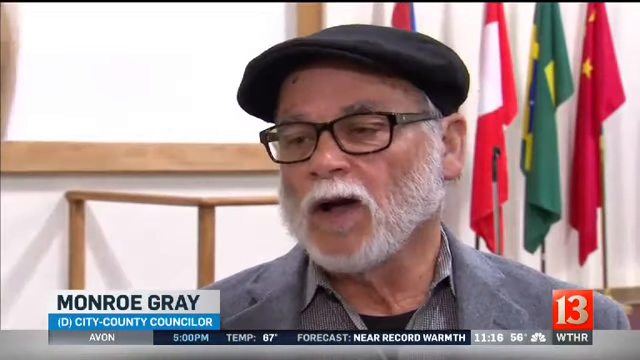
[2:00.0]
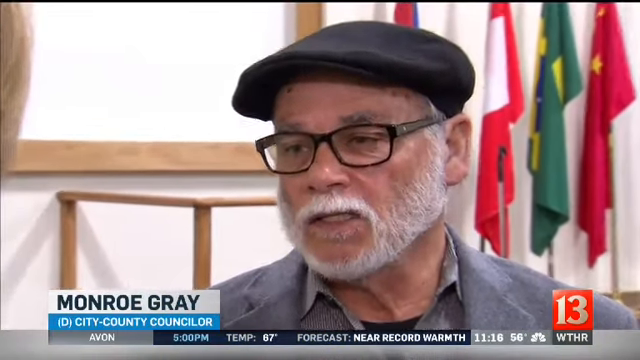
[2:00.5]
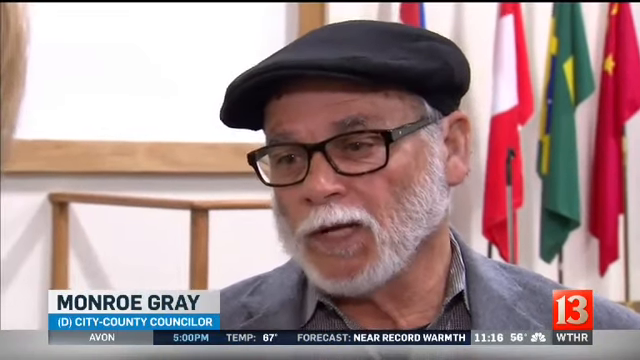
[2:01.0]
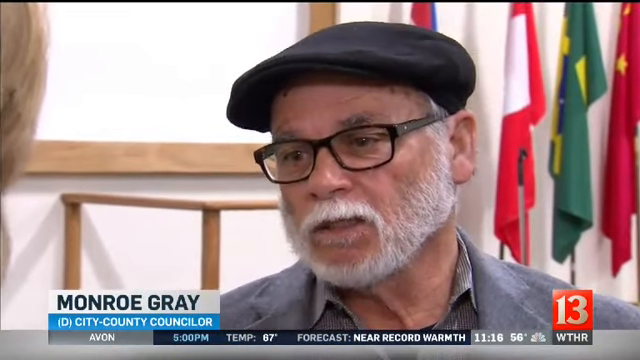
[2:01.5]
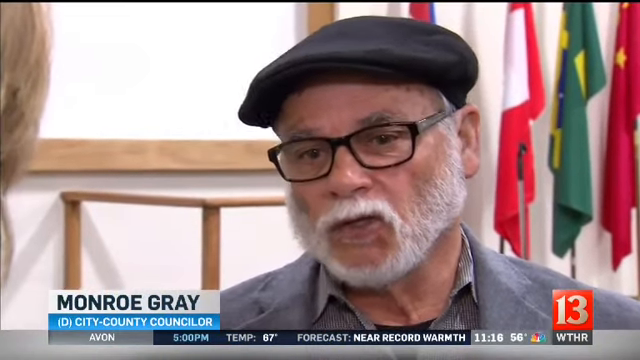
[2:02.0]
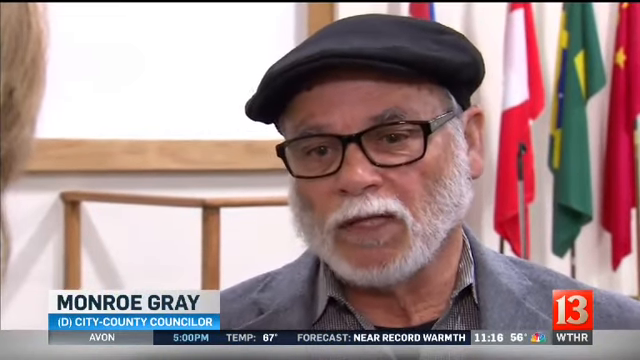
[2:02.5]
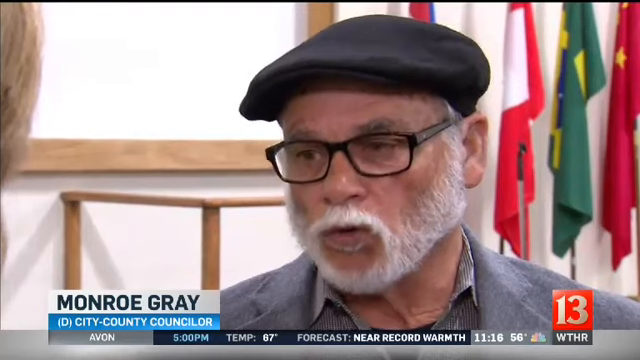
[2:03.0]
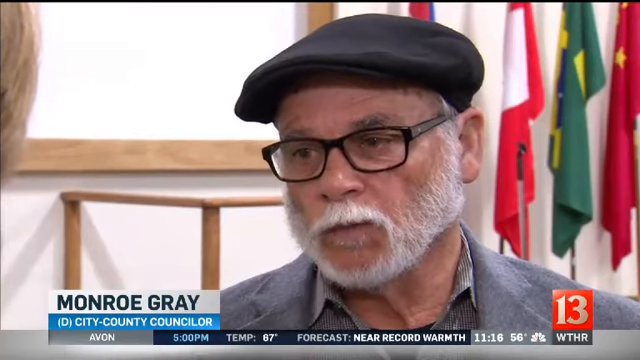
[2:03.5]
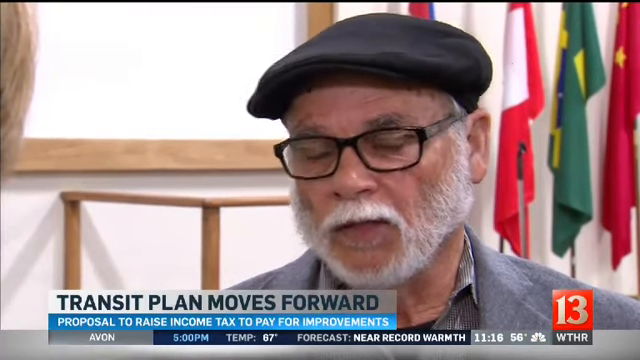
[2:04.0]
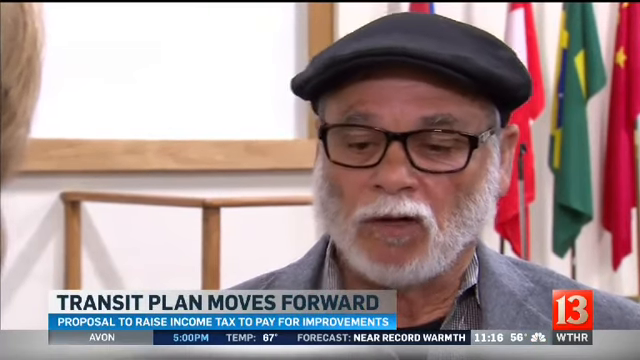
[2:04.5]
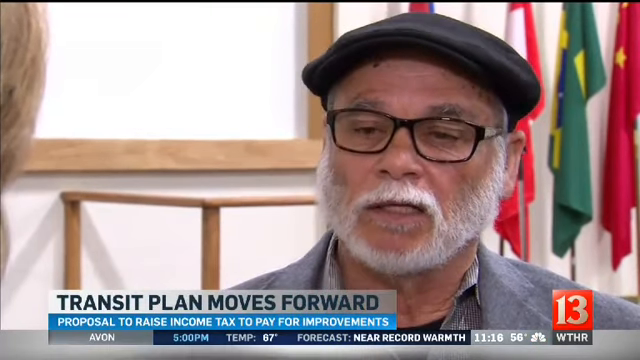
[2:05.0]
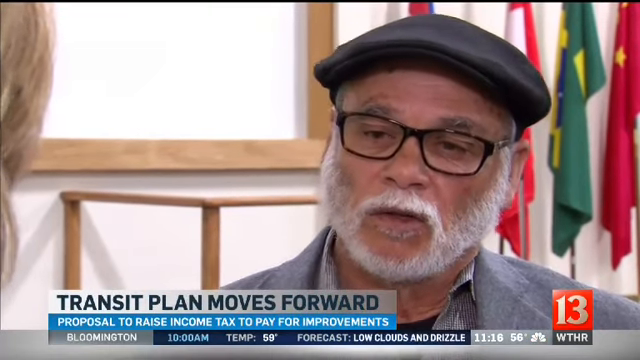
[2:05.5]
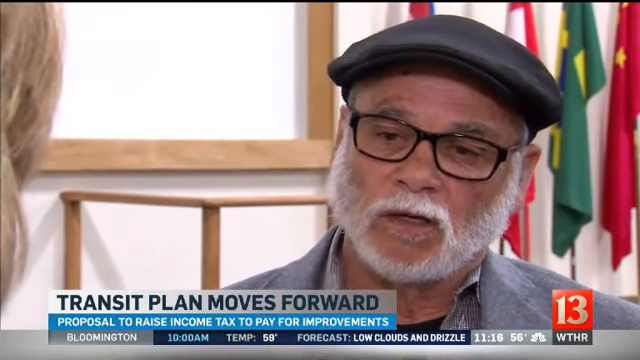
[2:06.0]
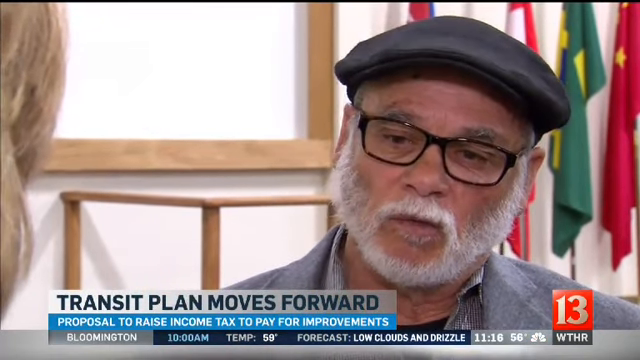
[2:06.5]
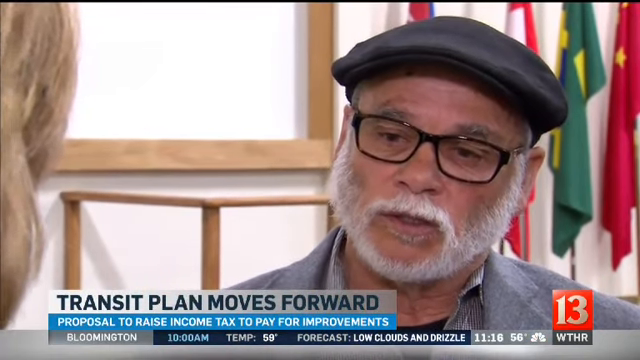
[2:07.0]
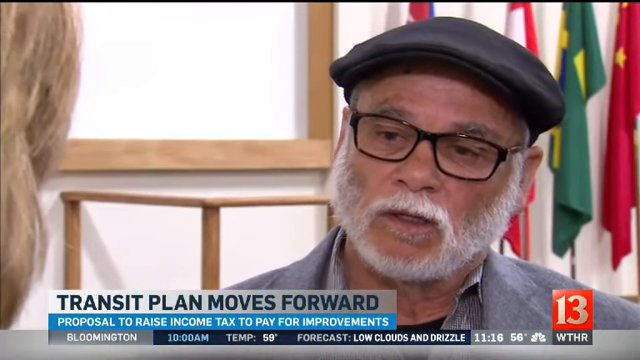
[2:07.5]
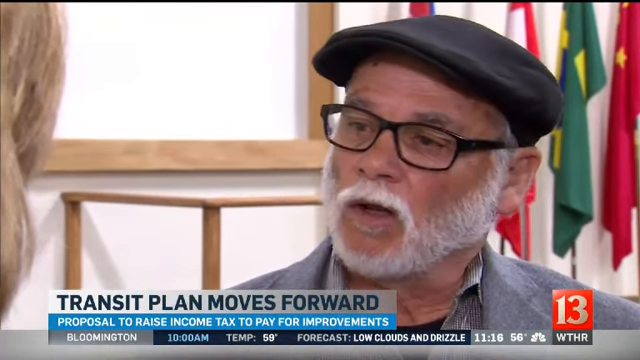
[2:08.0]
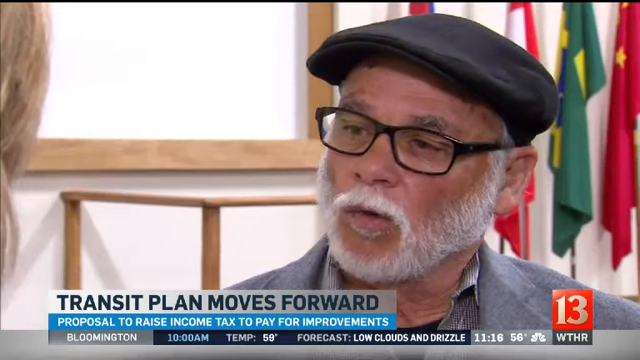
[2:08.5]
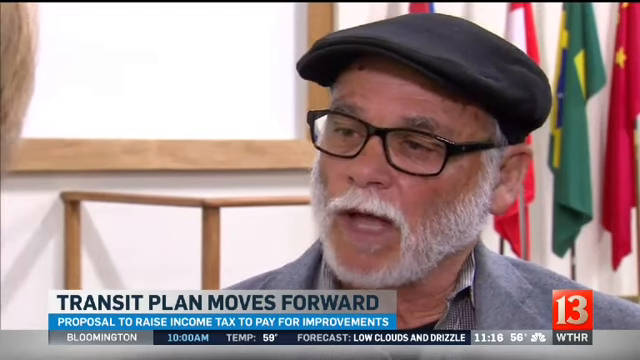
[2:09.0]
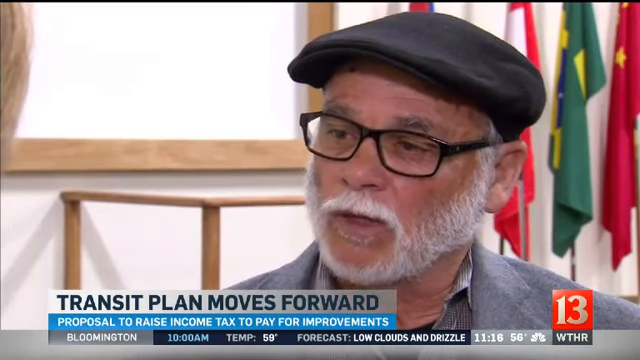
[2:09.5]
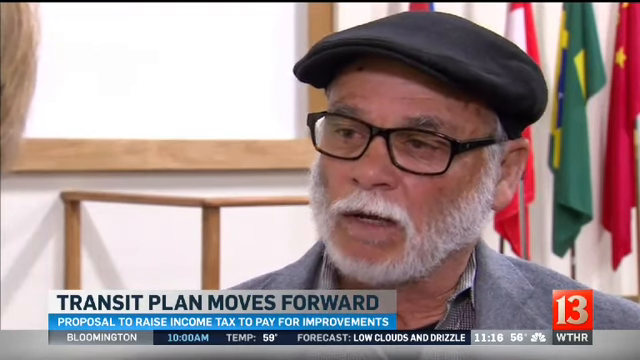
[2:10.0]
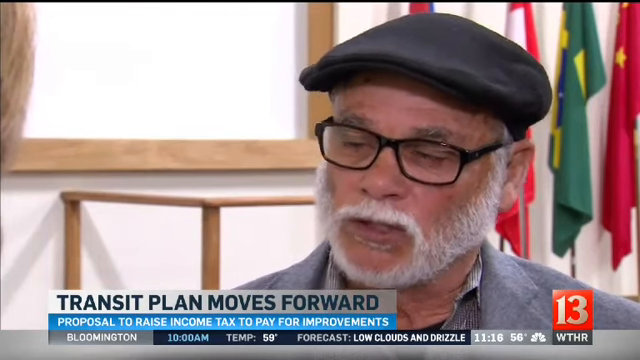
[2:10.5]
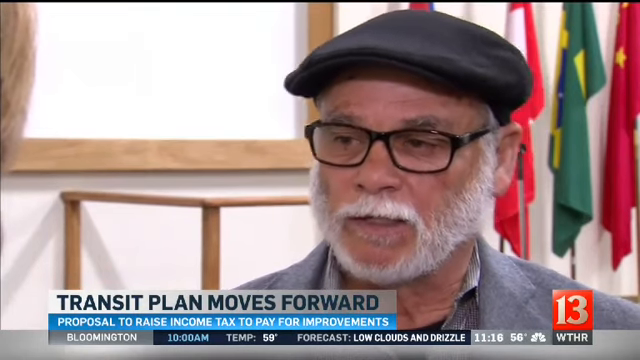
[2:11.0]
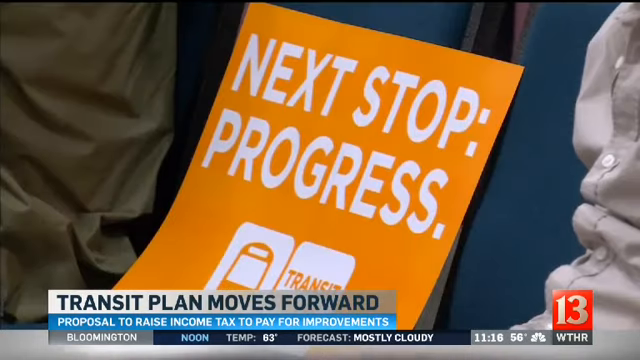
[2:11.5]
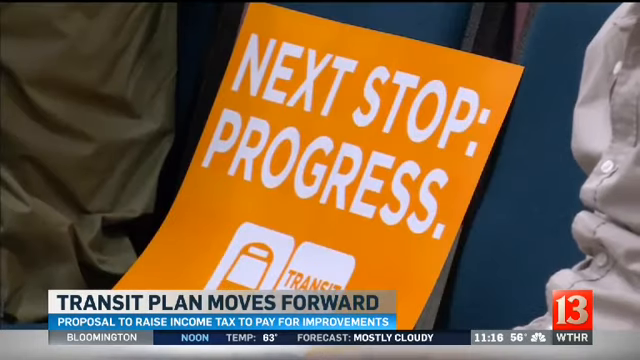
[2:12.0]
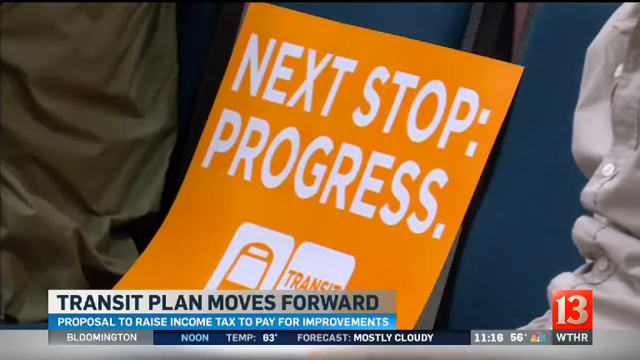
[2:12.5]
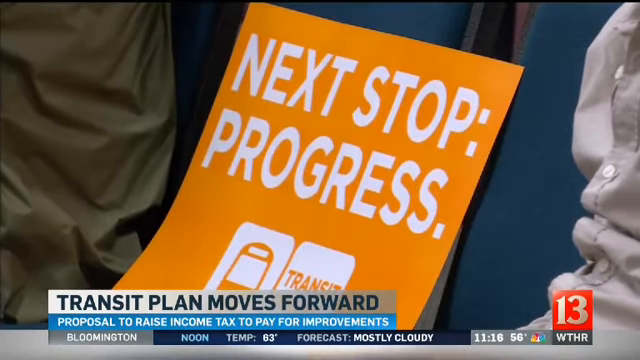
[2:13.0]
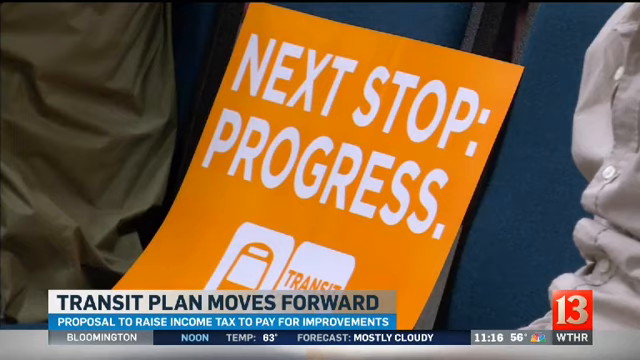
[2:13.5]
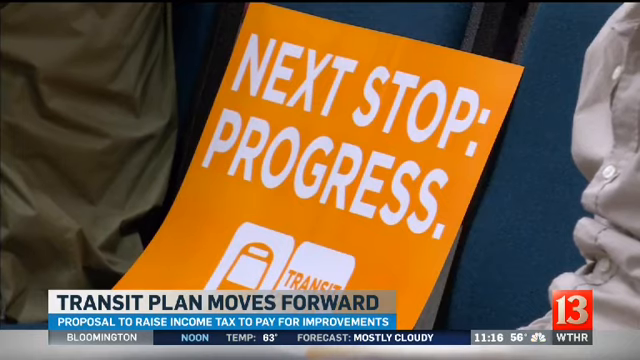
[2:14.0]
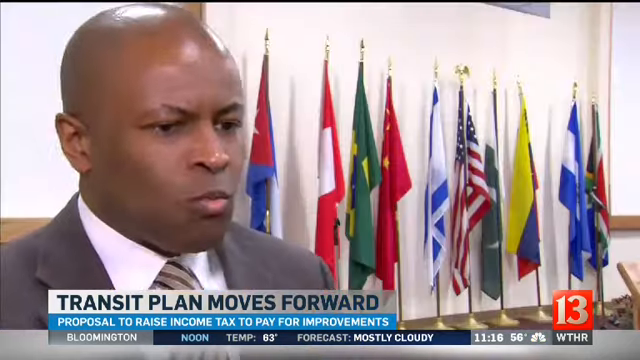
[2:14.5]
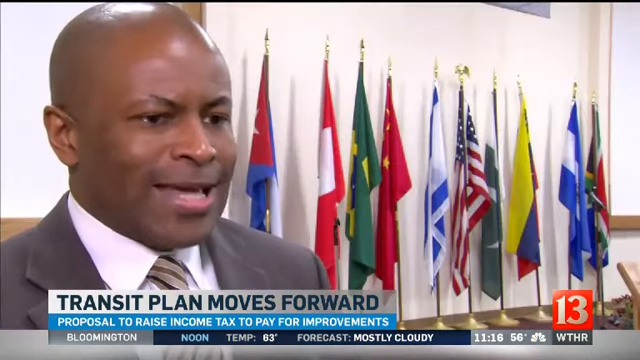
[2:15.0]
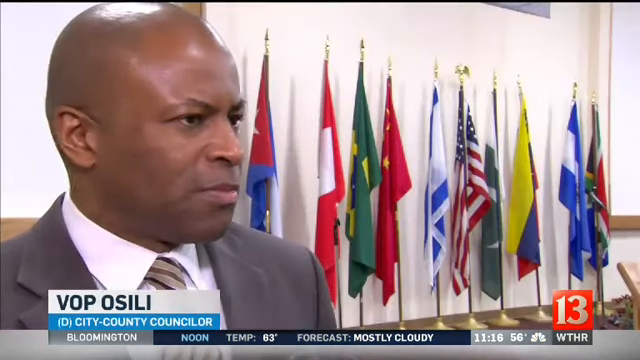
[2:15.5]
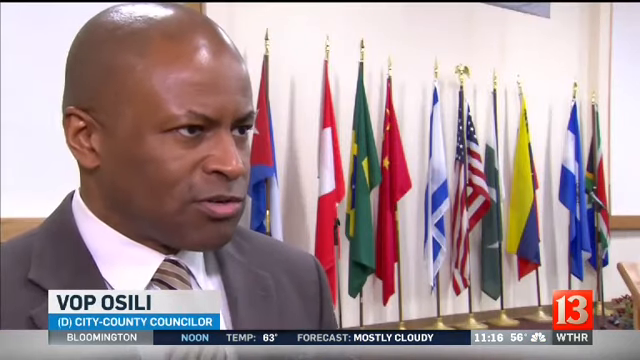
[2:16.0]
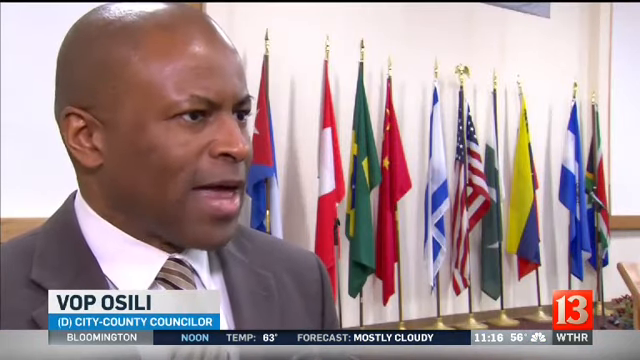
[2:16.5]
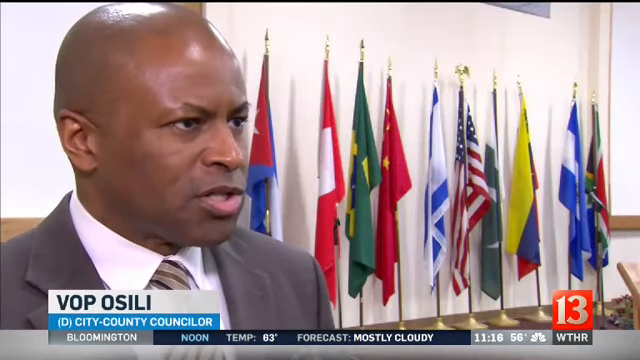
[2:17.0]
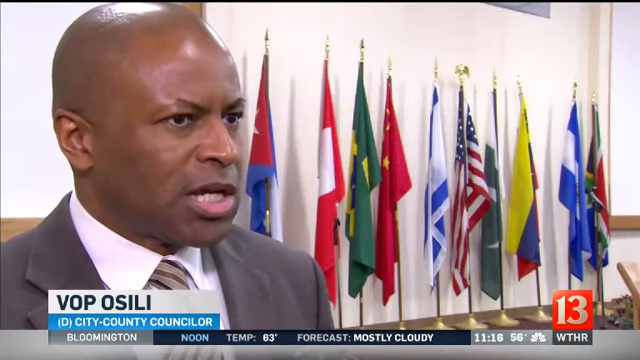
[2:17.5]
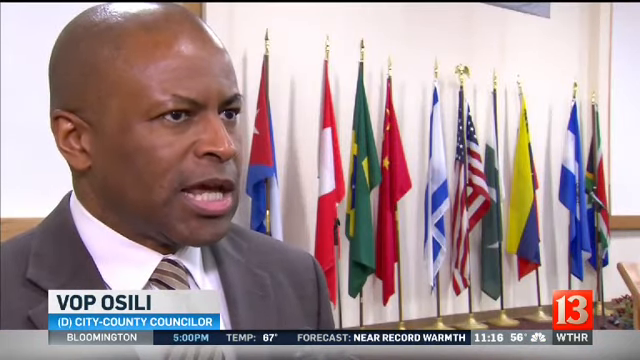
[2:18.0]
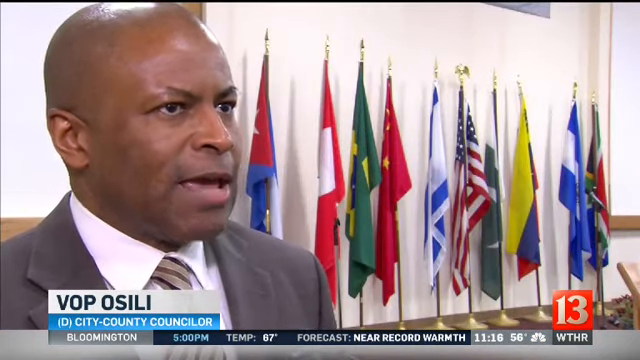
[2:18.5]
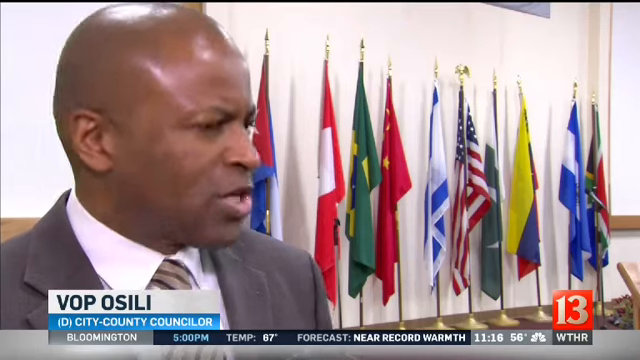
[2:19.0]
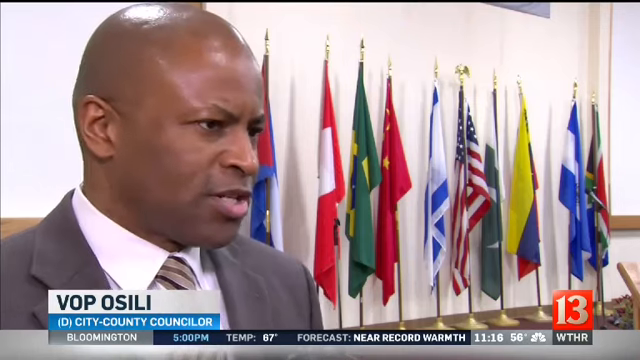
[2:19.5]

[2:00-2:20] The man with a short gray beard, black square glasses and a newsboy cap has several folded flags behind him on a pole against a white wall: a black and white one, a green and yellow one resembling the Brazilian flag, and a red one with yellow stars. A red square with the number 13 is superimposed on the lower right-hand corner, and a white bar says "Monroe Gray", then "D, City, County, Counselor", and underneath "Avon" with a time and temperature. He moves his head to the side; he is being interviewed and apparently talking. Next is a sign that says "Next Stop Progress" with an image of a bus in orange. Then a black man in a gray suit appears in front of a bunch more flags, and the white bar changes to give his name as "Vop Osili", with "D, City, County, Counselor" or something similar underneath; it goes by very fast.